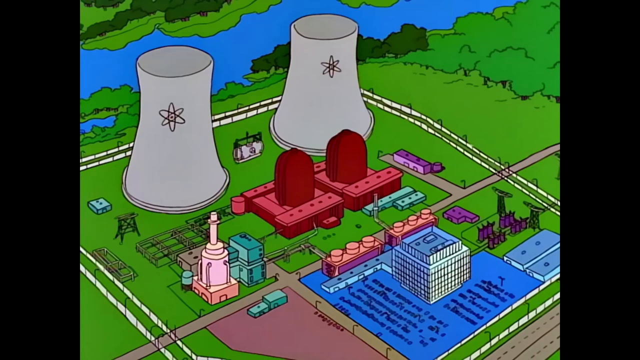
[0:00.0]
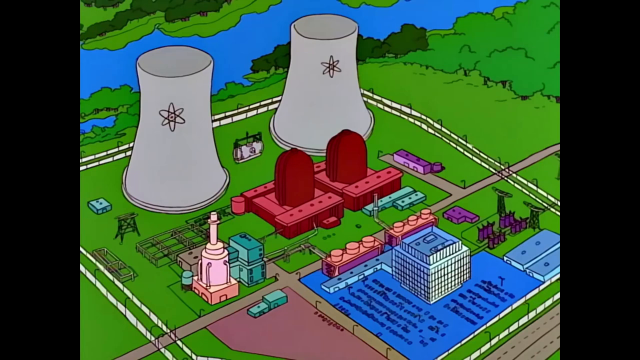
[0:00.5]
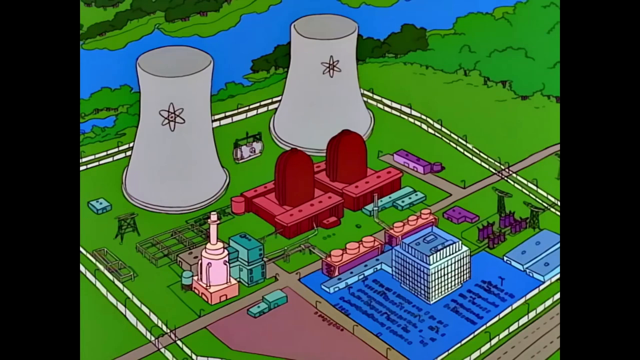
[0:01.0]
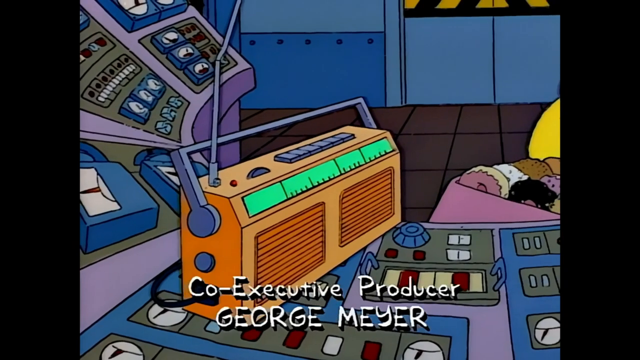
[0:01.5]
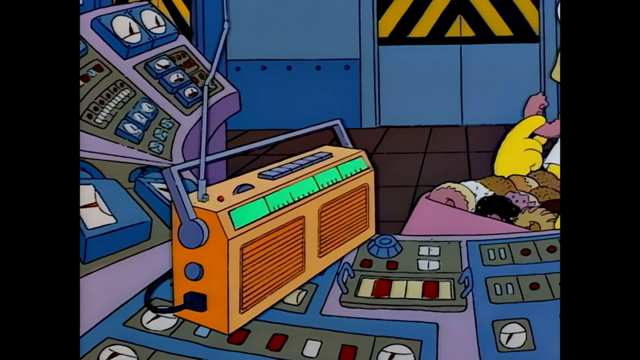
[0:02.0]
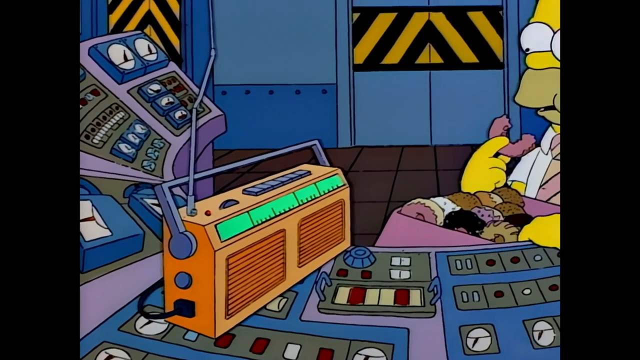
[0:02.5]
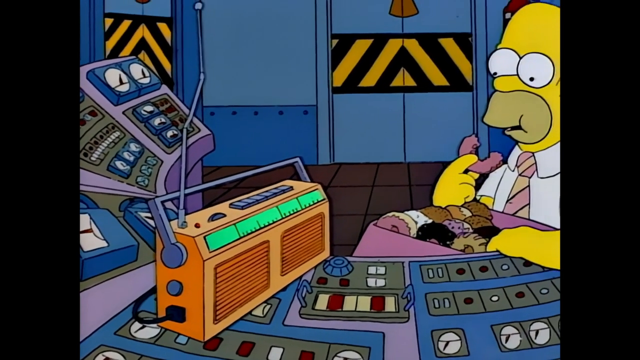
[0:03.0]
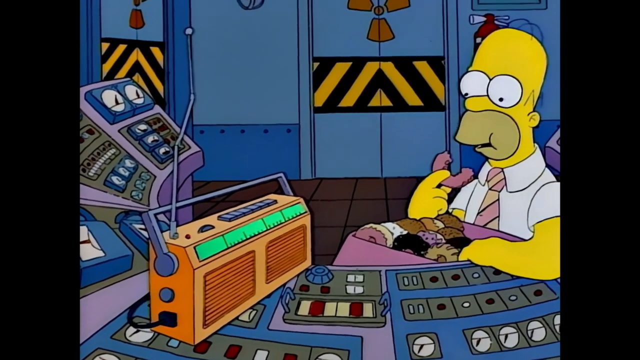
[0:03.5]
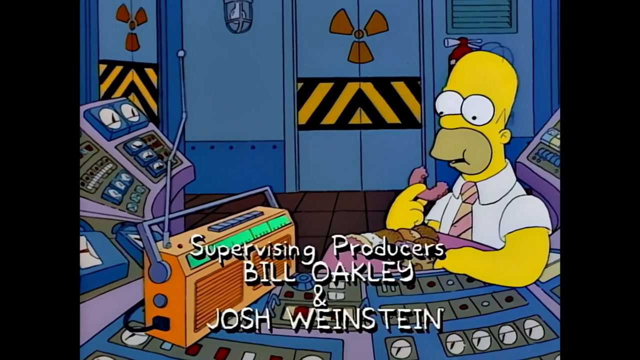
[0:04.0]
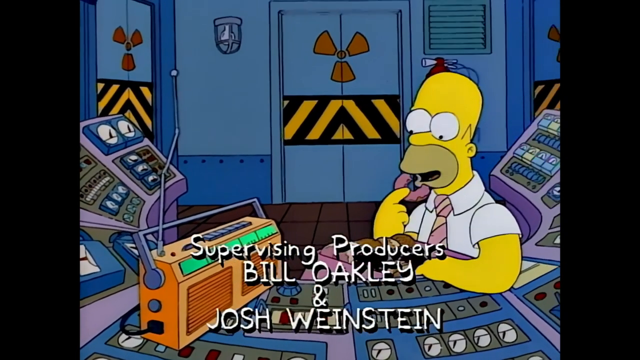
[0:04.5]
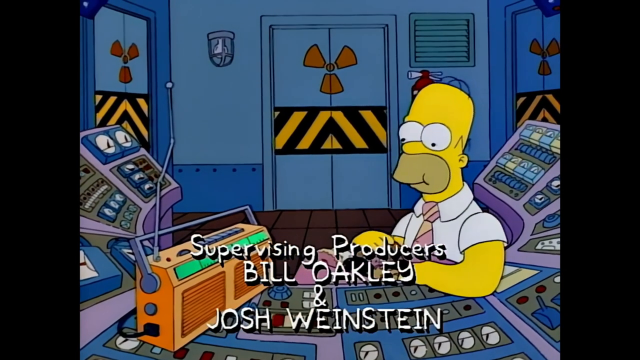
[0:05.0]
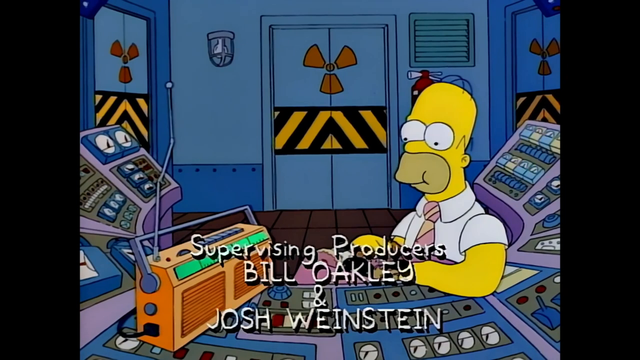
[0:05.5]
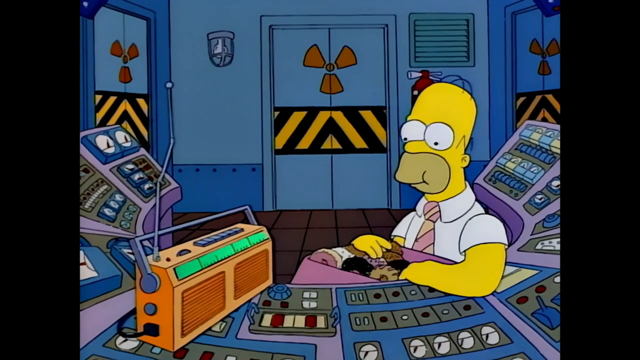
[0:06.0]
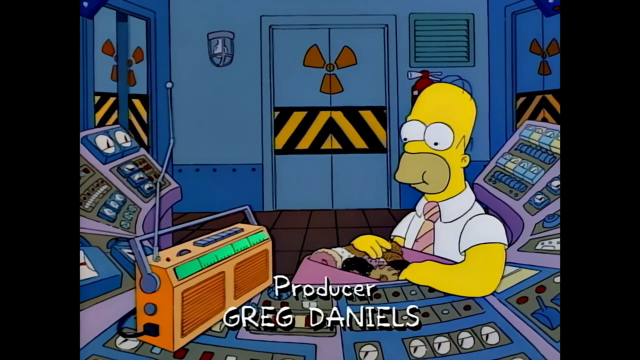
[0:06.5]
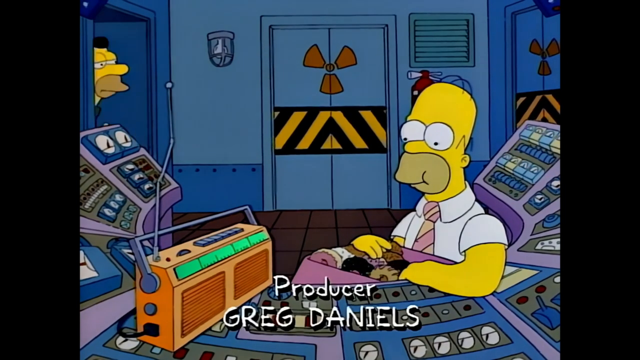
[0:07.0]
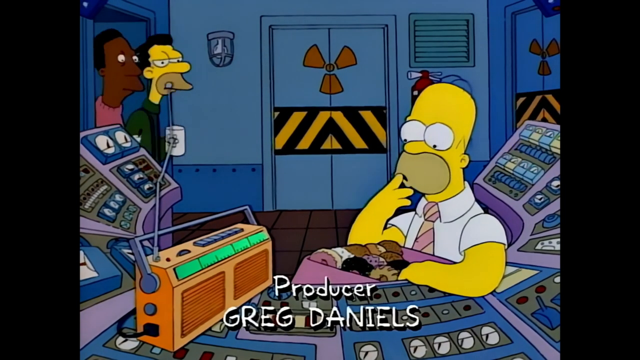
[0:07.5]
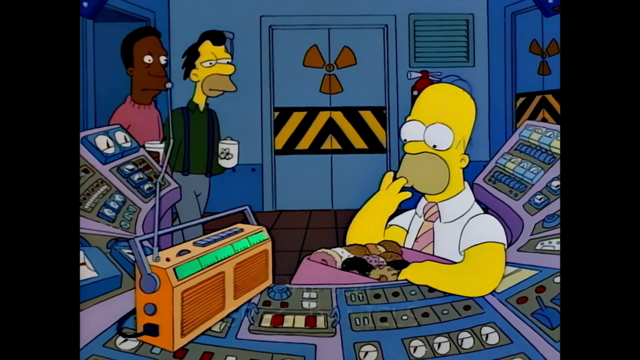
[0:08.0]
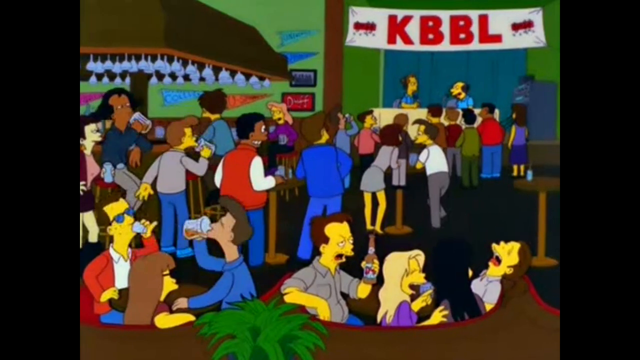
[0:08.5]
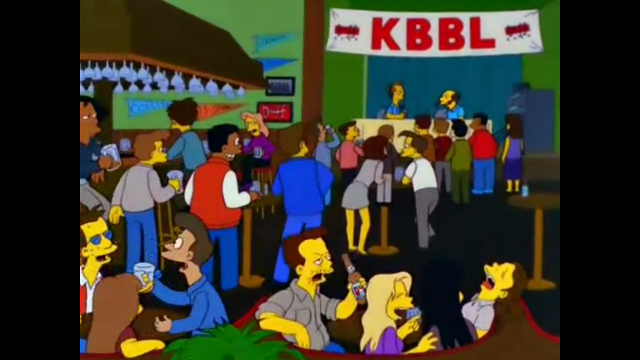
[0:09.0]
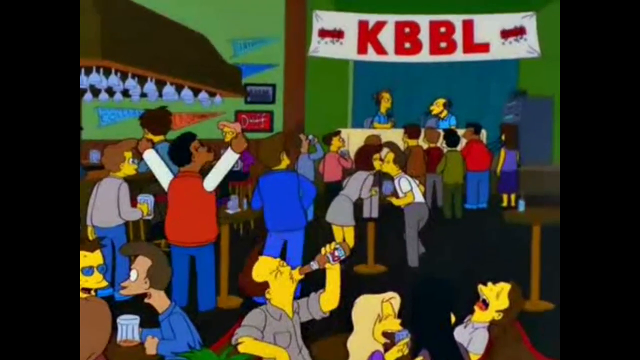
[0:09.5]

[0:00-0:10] The video is from the cartoon The Simpsons. It opens with black borders on the left and right and an overhead shot of the Springfield power plant. In the top left, reaching about halfway across, there is light green grass with dark green trees, then water, then more grass and trees. Pipes run from the left up to the midway point and over to the right, and at the lower right are two big gray nuclear power plants, with some smaller red and blue buildings. The scene cuts inside, where Homer Simpson sits at a control panel facing four pipes. He is eating donuts, with a box of donuts in his lap, a donut in his left hand and his other hand resting. A radio is on the control panel to his left. Behind him are big radioactive doors, one to the left and one to the right. As he chews, two coworkers, Lenny and Moe, walk in. The scene then cuts to an overhead shot of people at a bar raising their hands up and down, protesting.